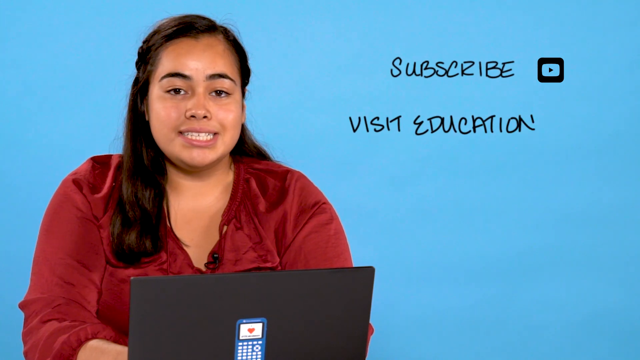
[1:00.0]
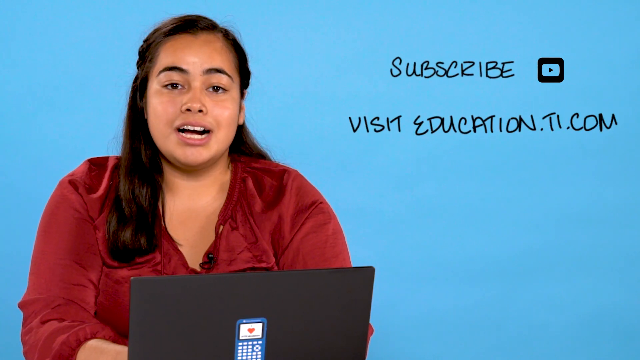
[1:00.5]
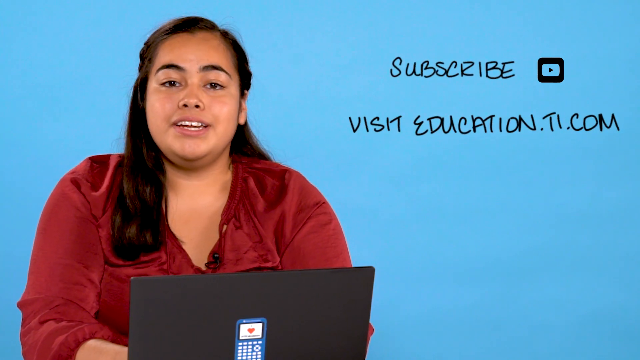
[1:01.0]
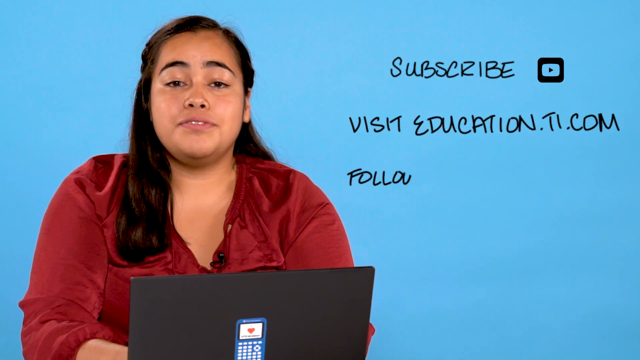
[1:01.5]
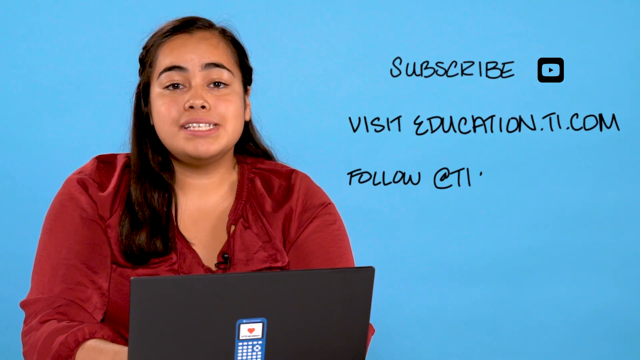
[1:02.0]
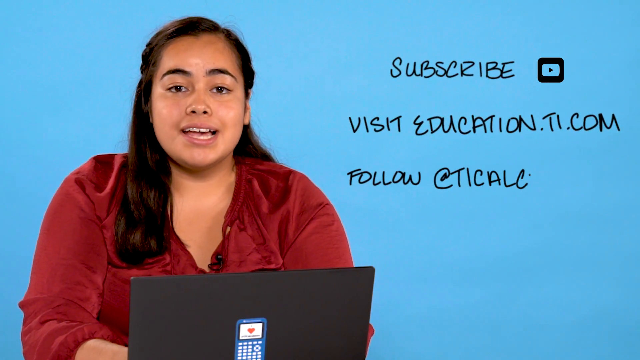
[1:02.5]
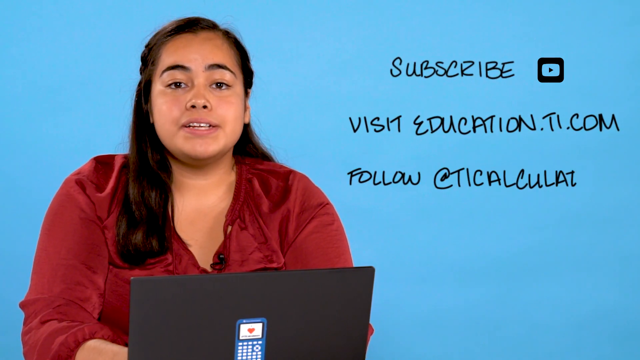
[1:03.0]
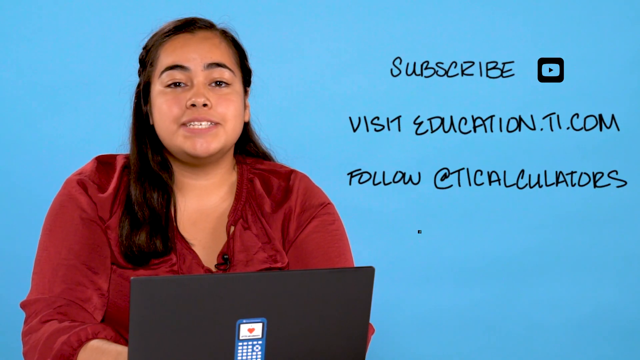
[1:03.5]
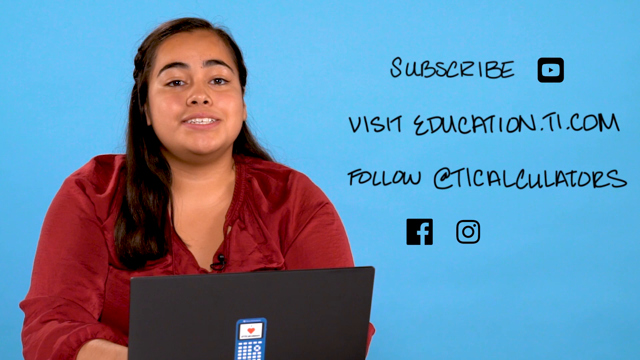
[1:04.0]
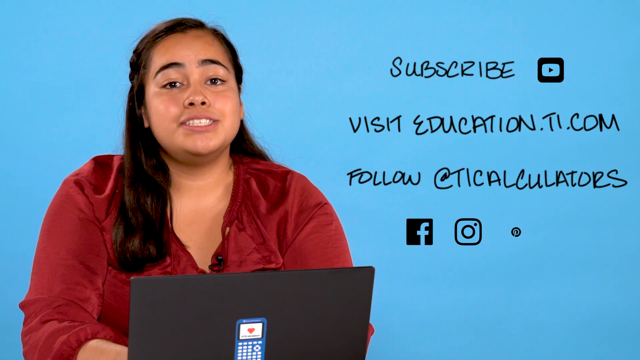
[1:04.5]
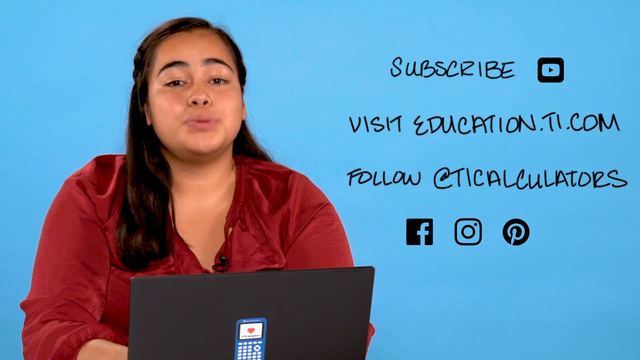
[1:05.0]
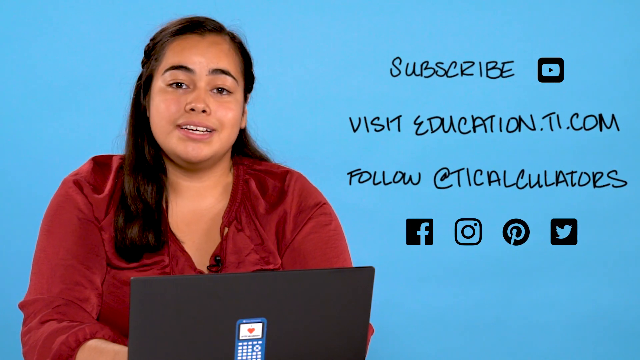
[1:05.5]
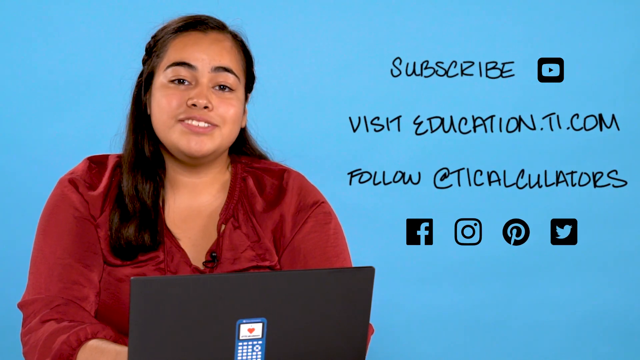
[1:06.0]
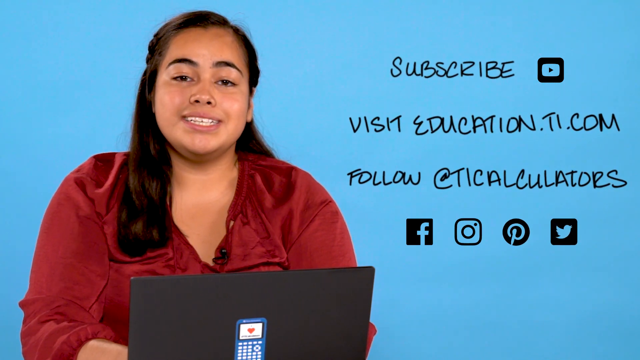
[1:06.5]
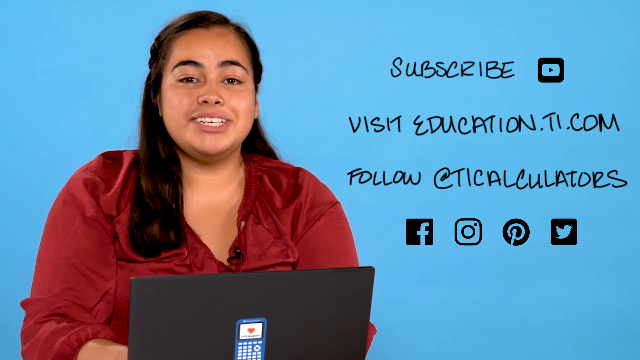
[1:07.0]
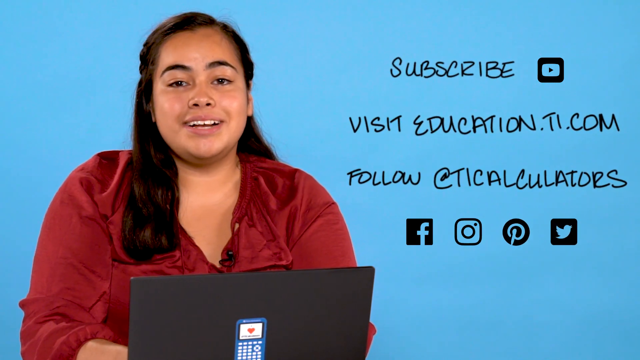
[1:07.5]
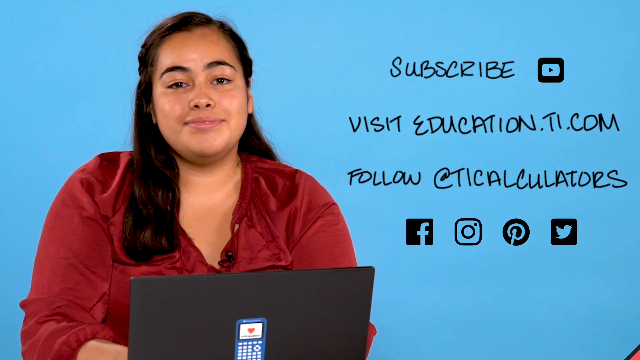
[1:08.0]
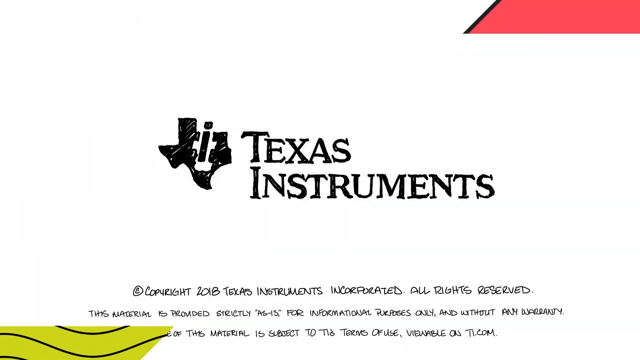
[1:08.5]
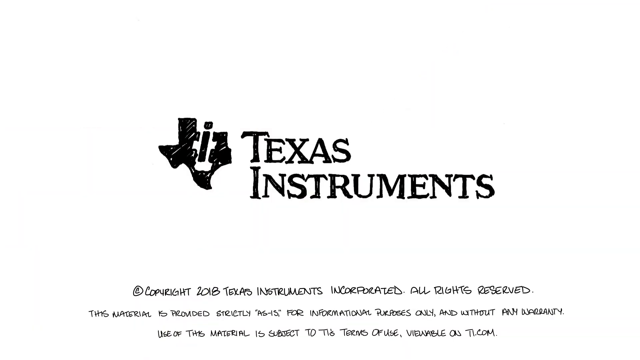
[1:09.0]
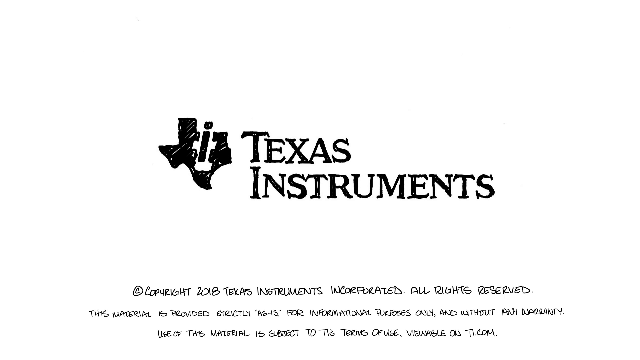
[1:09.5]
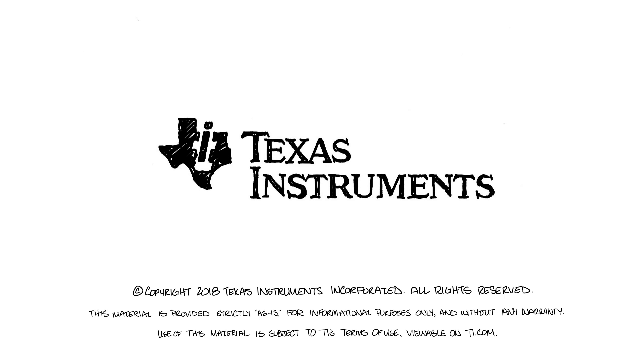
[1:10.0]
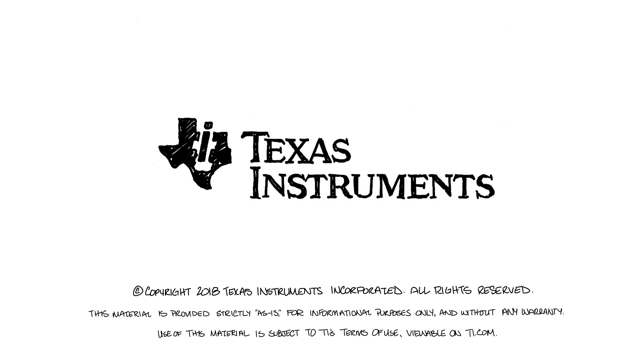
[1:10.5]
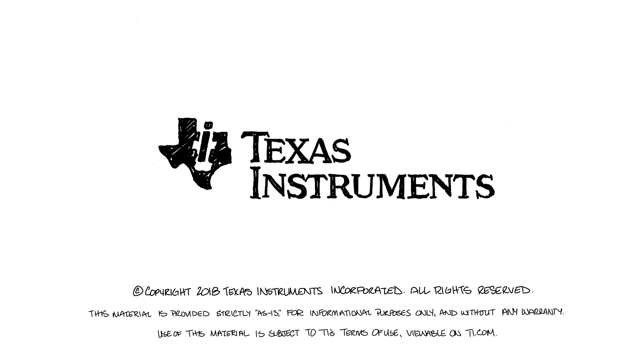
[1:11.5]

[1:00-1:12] The ending shows the woman's details: subscribe to her YouTube channel, visit education.ti.com, and follow calculators on Facebook and Twitter. It also shows Texas Instruments, a copyright notice for Texas Instruments, and that all rights are reserved.